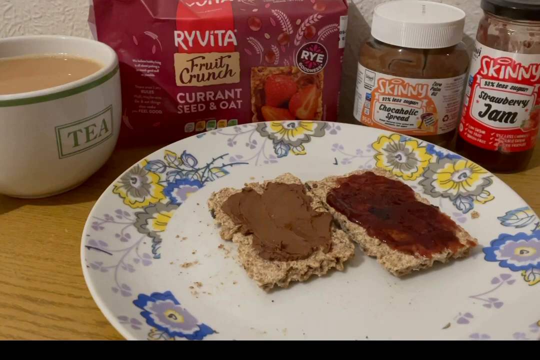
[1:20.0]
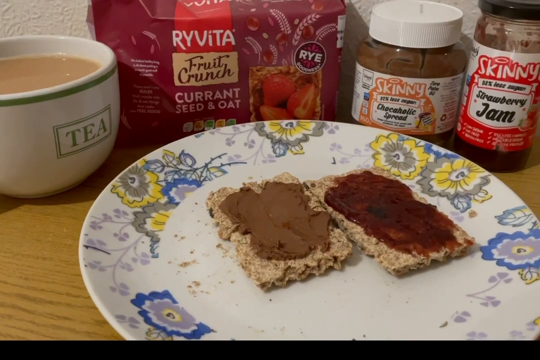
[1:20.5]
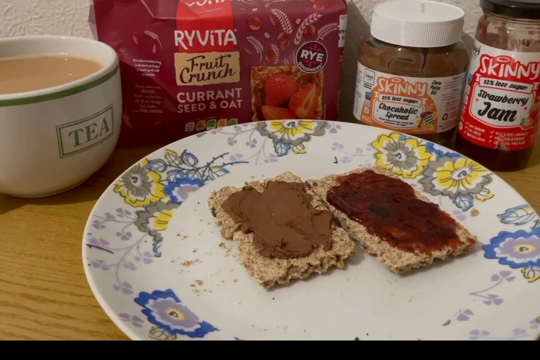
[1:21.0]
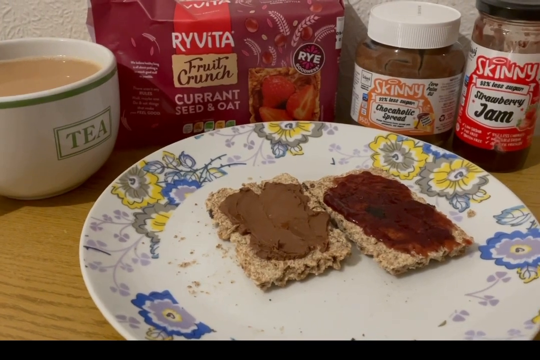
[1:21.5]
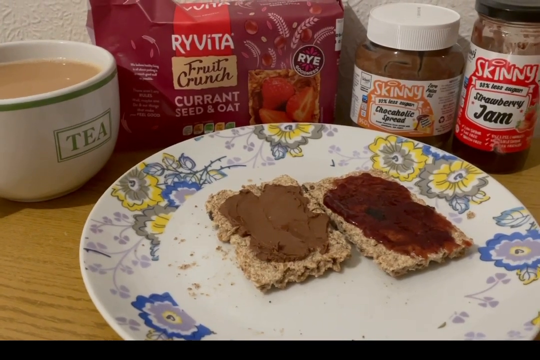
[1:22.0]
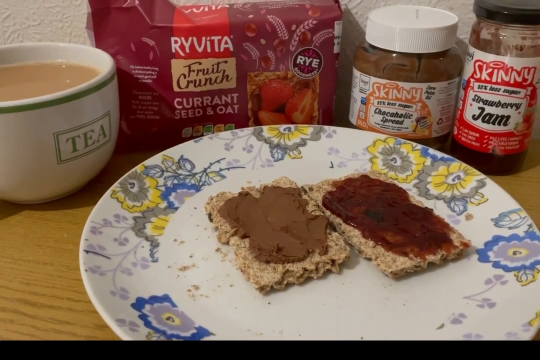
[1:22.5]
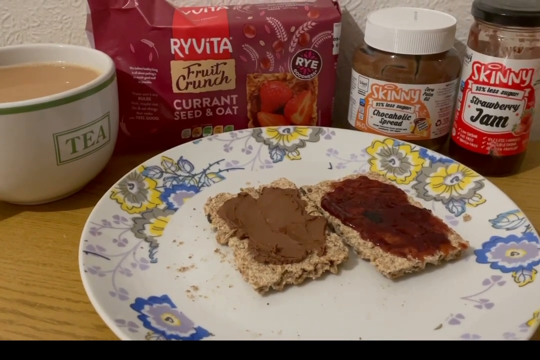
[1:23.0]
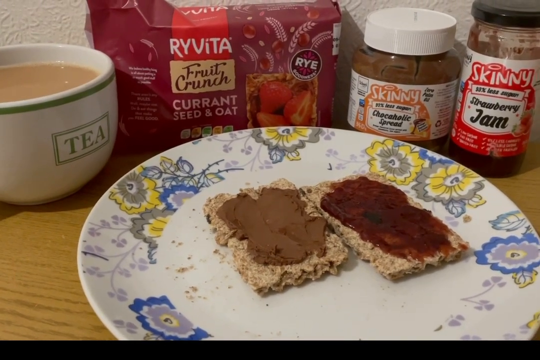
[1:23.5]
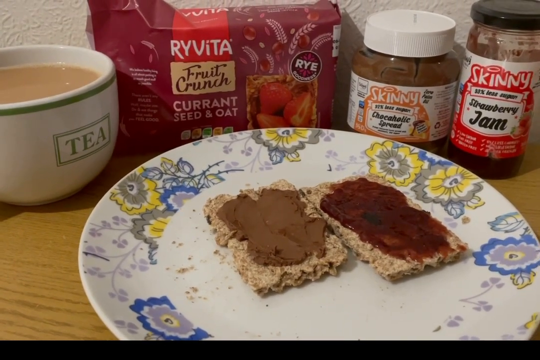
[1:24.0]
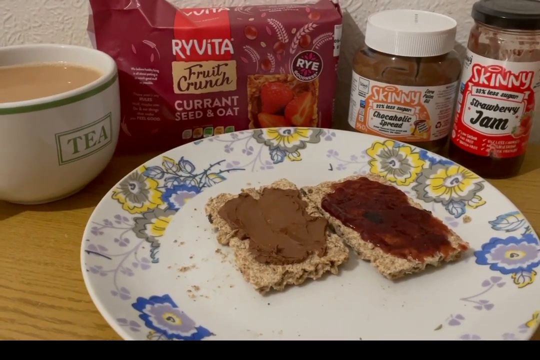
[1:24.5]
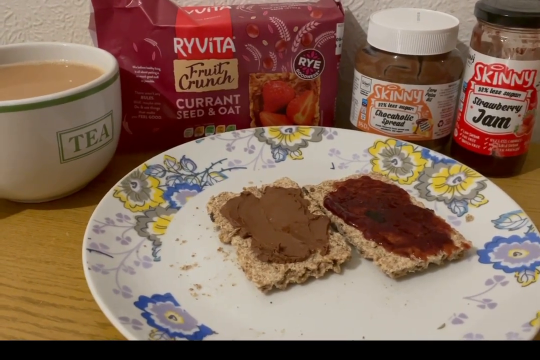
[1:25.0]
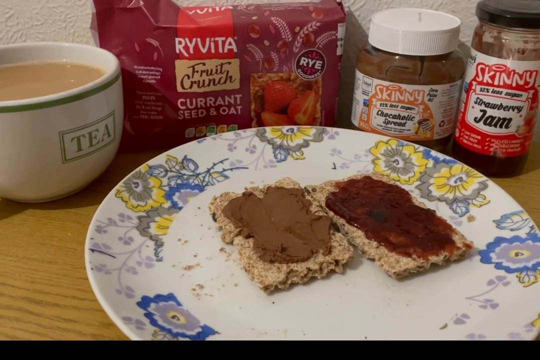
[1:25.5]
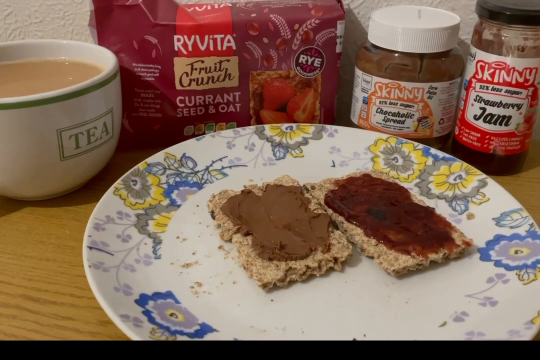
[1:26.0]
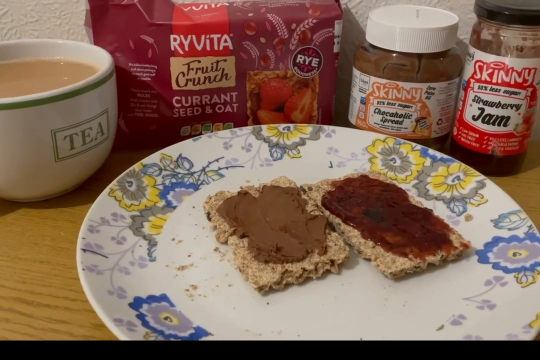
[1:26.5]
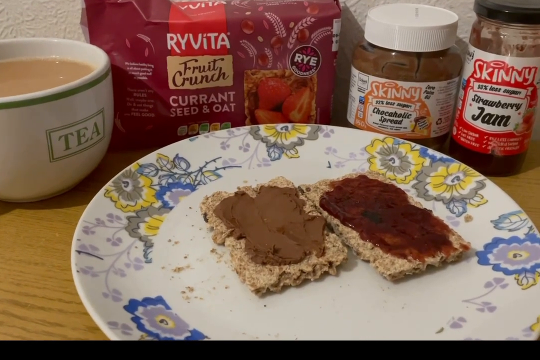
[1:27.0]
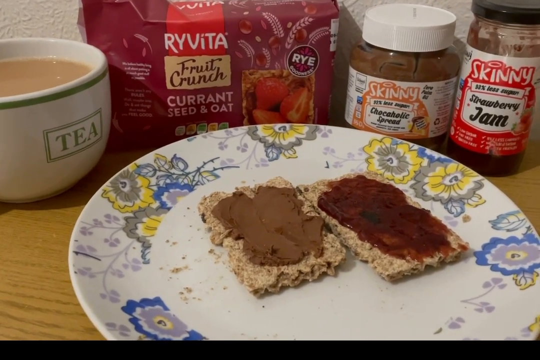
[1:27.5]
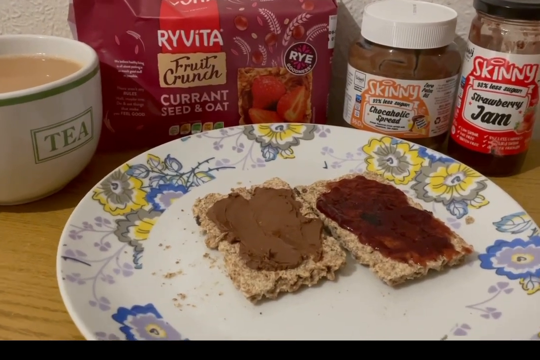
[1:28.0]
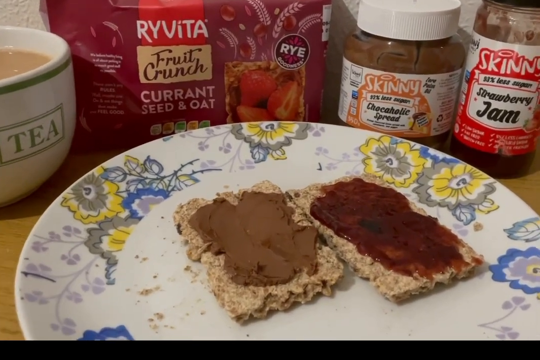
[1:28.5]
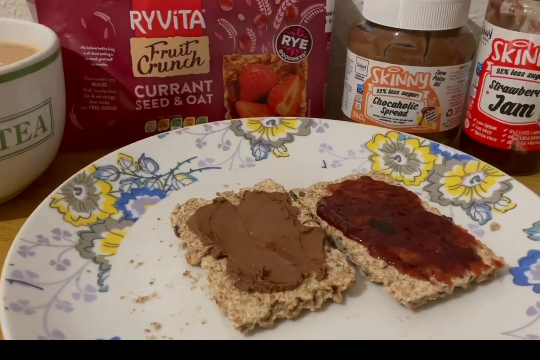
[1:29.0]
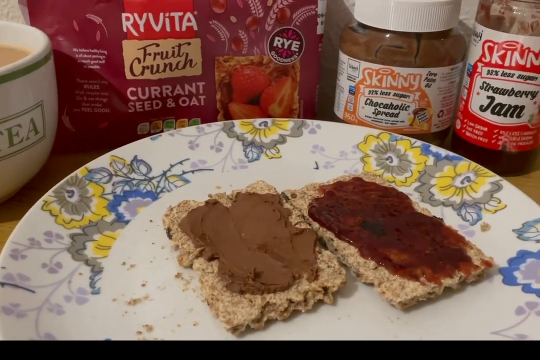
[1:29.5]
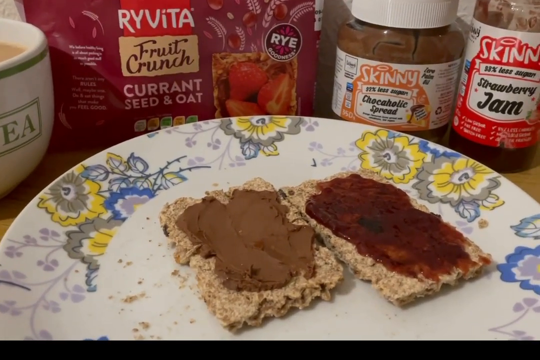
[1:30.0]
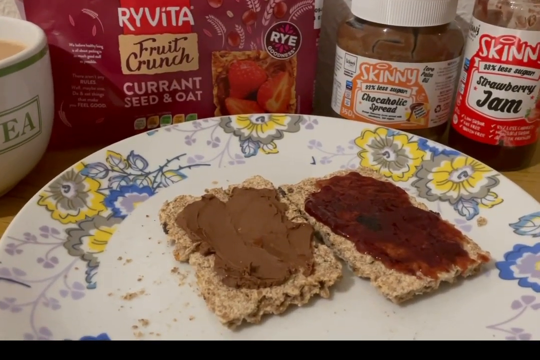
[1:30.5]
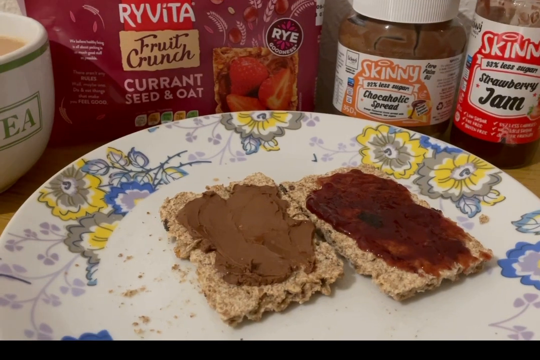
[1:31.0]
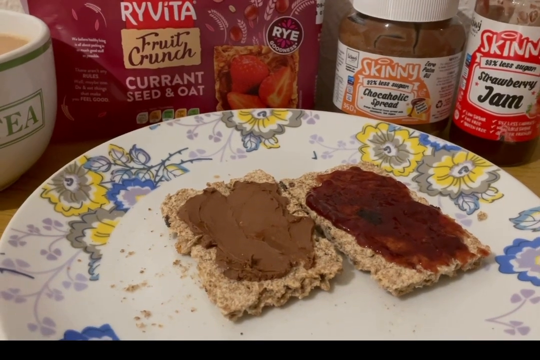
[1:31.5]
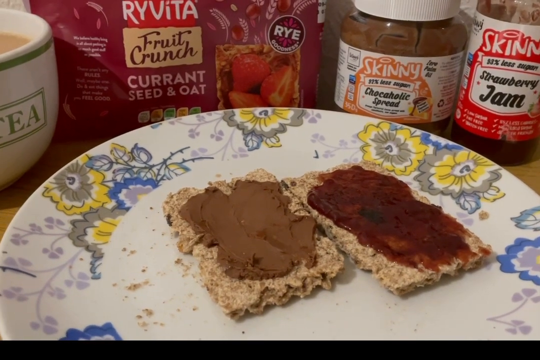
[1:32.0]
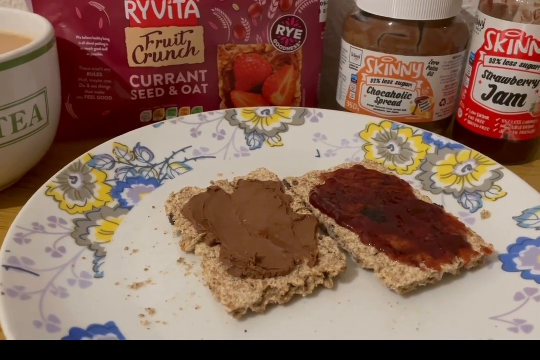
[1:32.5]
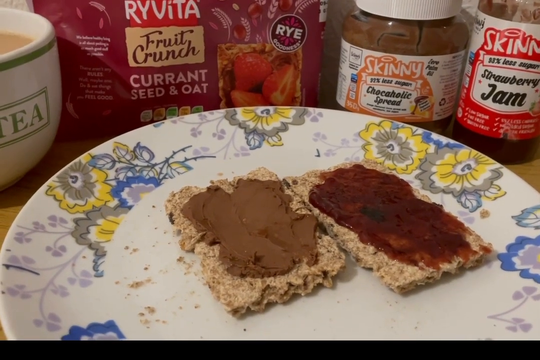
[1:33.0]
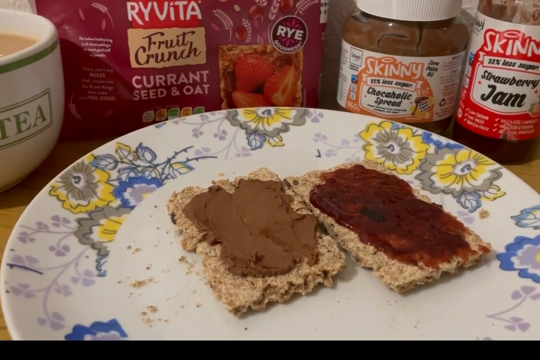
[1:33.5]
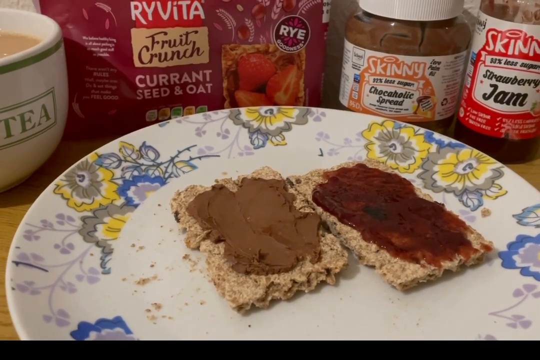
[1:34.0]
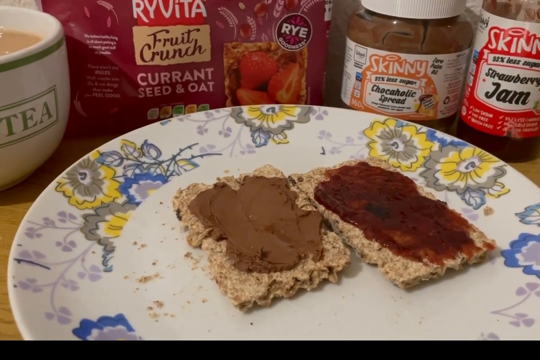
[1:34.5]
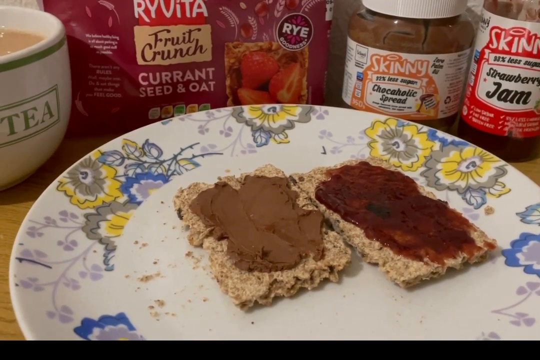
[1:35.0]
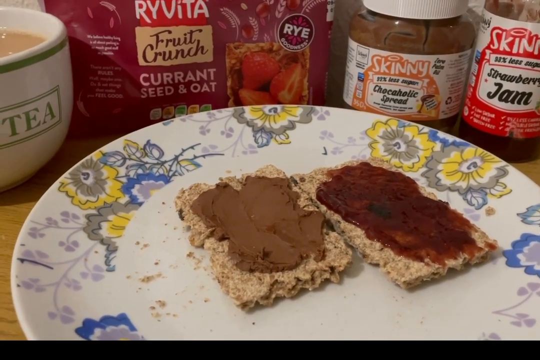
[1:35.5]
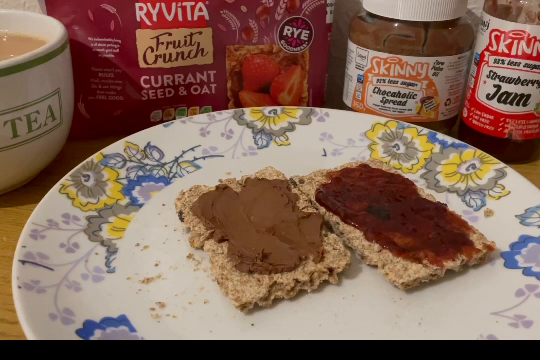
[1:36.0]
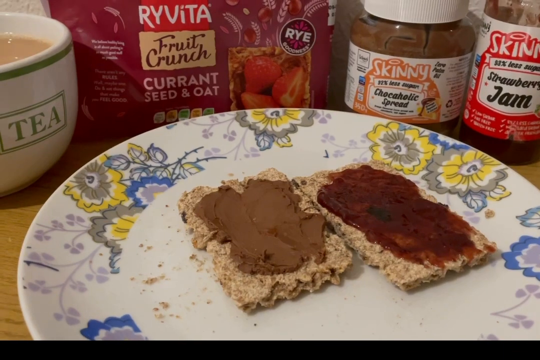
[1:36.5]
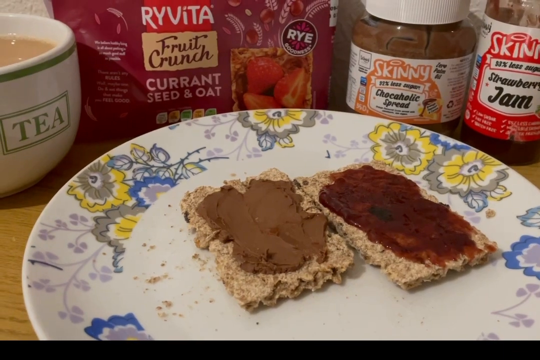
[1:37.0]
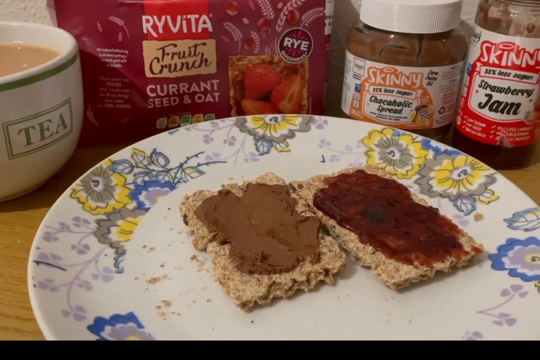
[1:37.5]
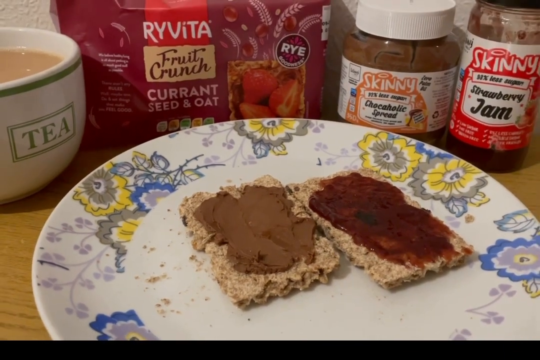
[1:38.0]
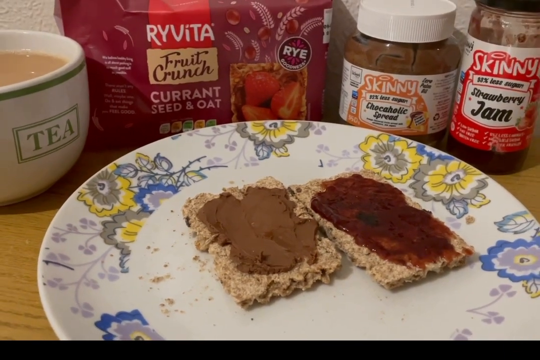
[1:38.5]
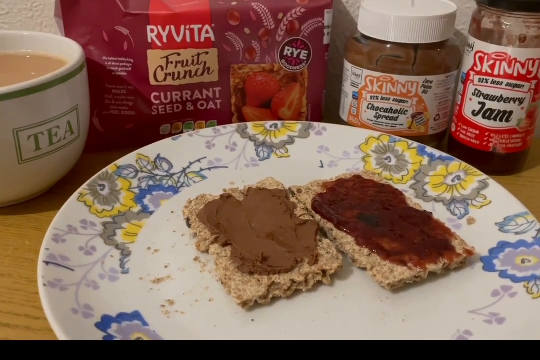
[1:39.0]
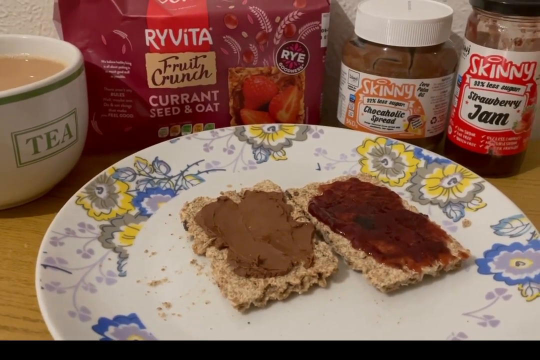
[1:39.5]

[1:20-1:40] The same image is presented, with nothing moved. The camera closes in on the Ryvita on the plate, giving a closer image in which the chocolate spread has a textured finish, with bits sticking up rather than smooth, while the jam appears soft, more liquid, and is perhaps soaking into the crisp bread. The text on the jars perhaps says "32% less sugar" on both; the rest of the labels cannot really be seen. The worktop the items are on might be a table, but little of it is visible and it is so close to the wall that it may be no more than a breakfast bar. It looks as if it has a wood grain, but it may be artificial, some sort of textured MDF. The wall behind the items is very textured. At the start most of the cup of tea and all of the strawberry jam jar are visible, but as the camera closes in only maybe half of the cup of tea is visible, the top of the jam jar cannot be seen at all, and only some of the white plastic lid of the chocolate spread is visible.